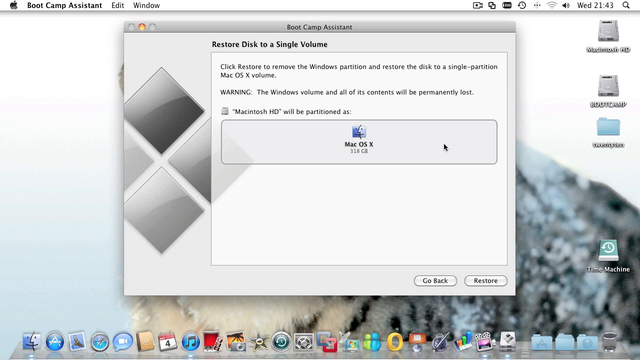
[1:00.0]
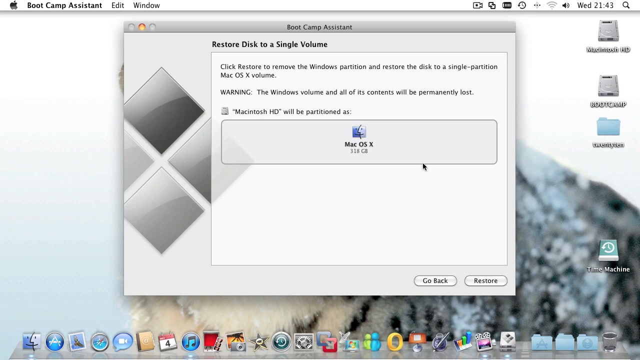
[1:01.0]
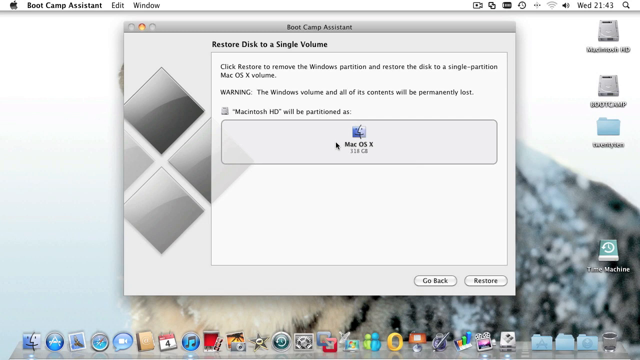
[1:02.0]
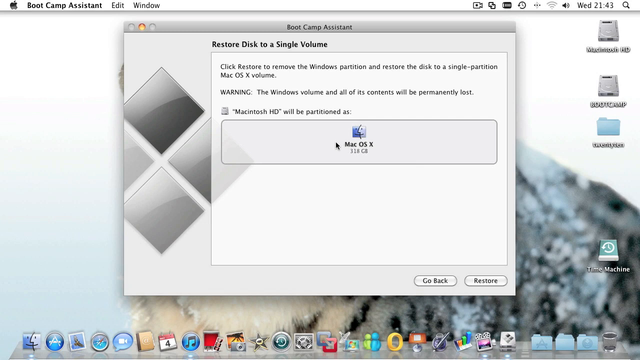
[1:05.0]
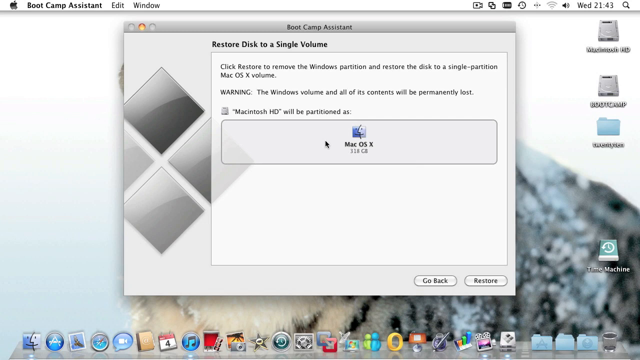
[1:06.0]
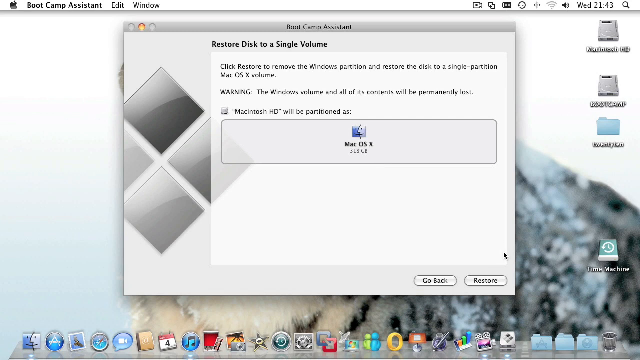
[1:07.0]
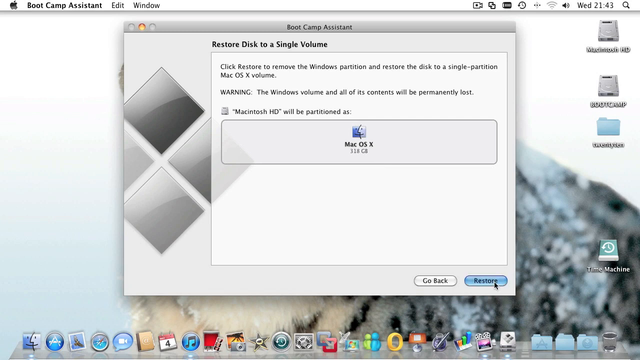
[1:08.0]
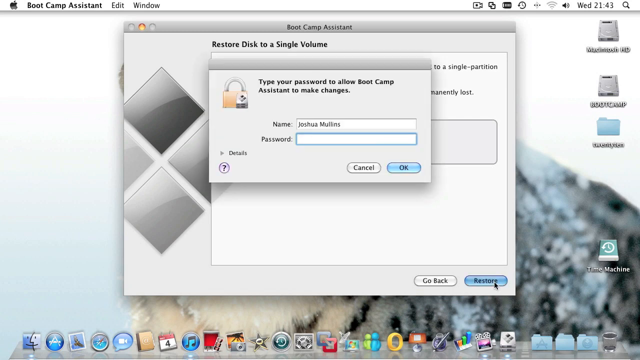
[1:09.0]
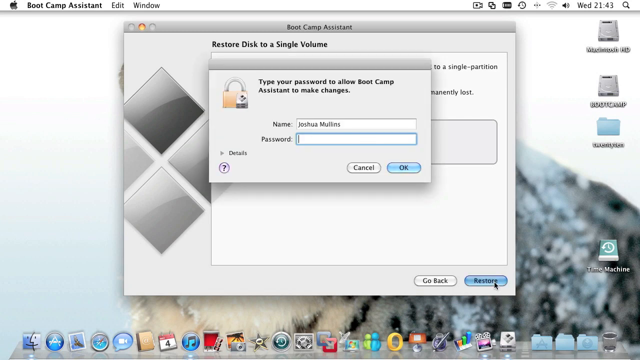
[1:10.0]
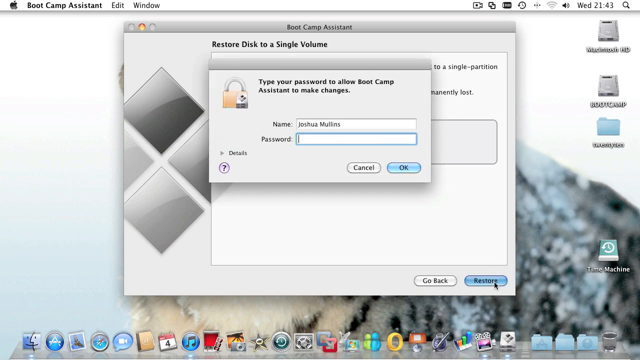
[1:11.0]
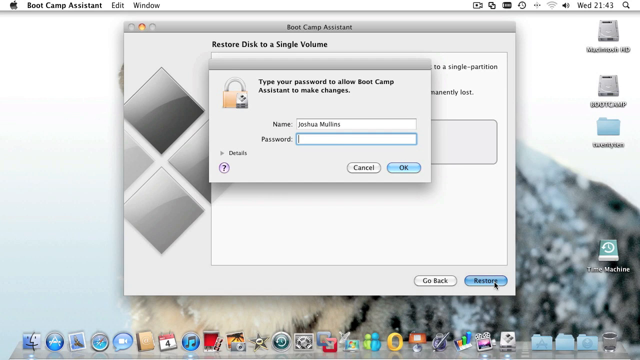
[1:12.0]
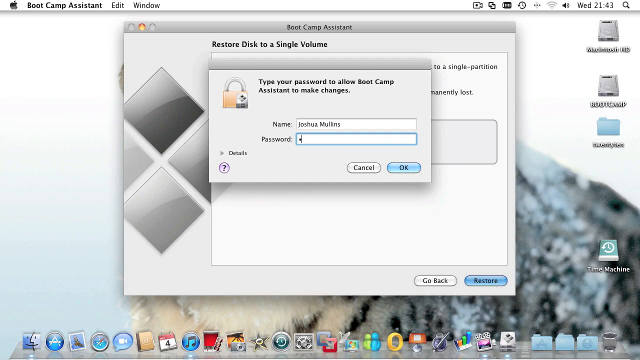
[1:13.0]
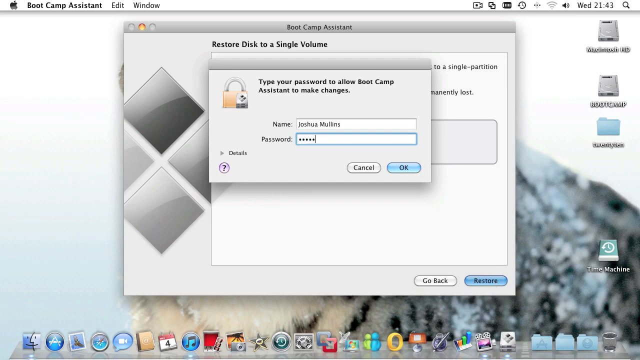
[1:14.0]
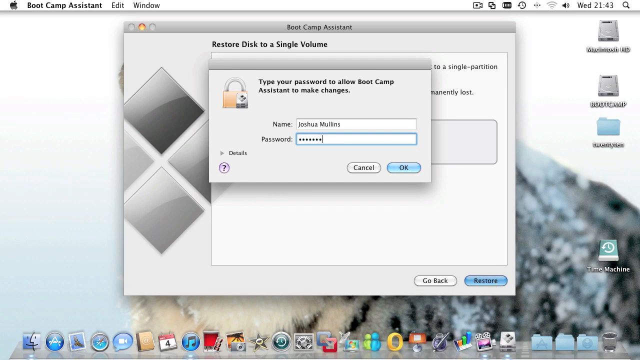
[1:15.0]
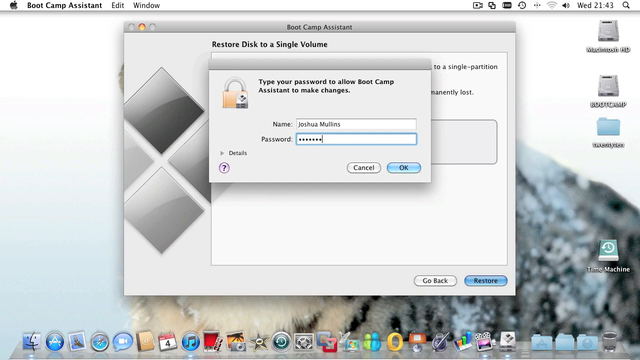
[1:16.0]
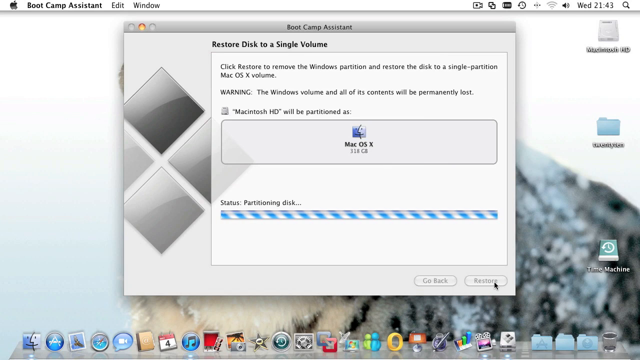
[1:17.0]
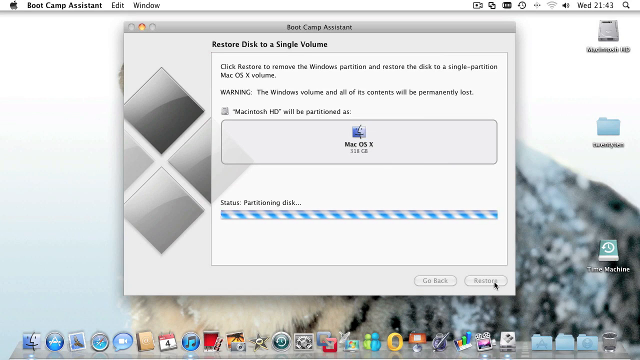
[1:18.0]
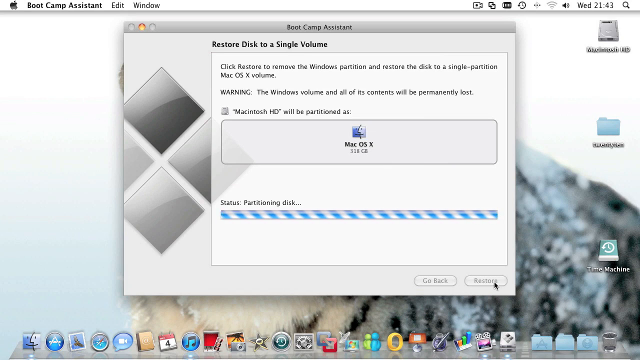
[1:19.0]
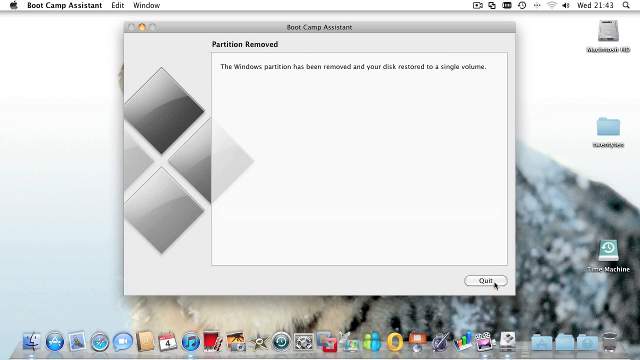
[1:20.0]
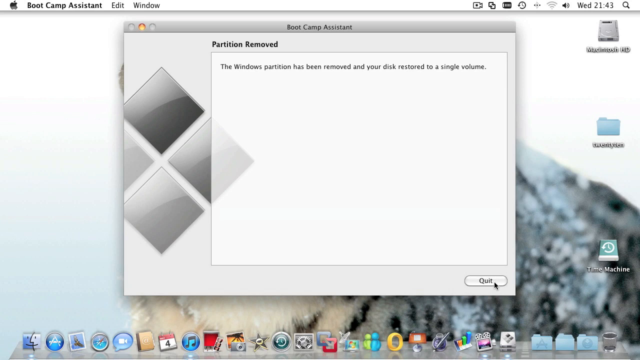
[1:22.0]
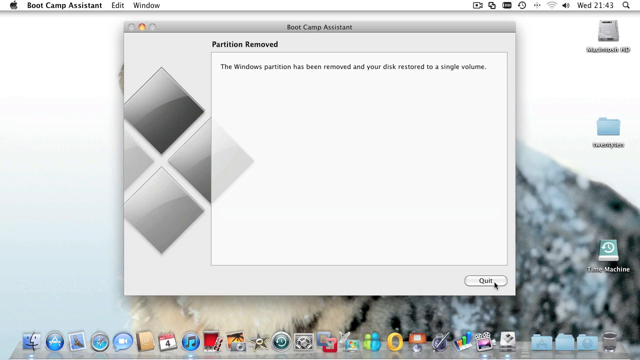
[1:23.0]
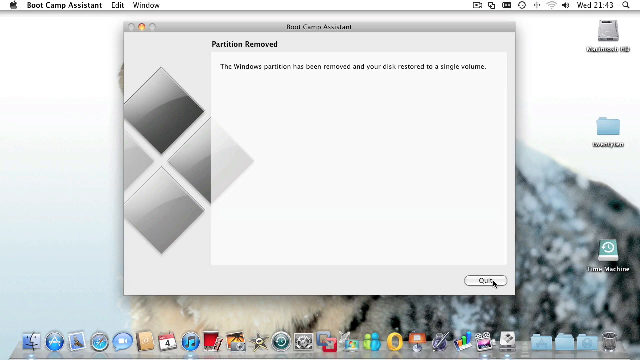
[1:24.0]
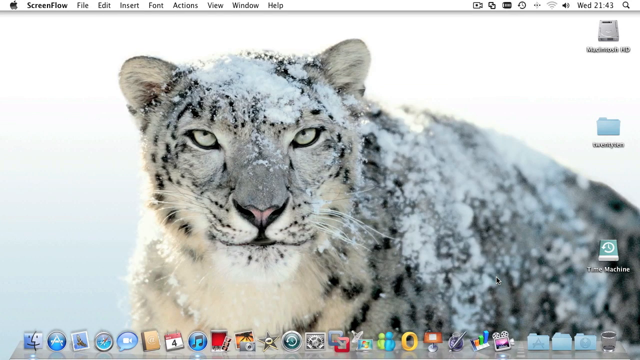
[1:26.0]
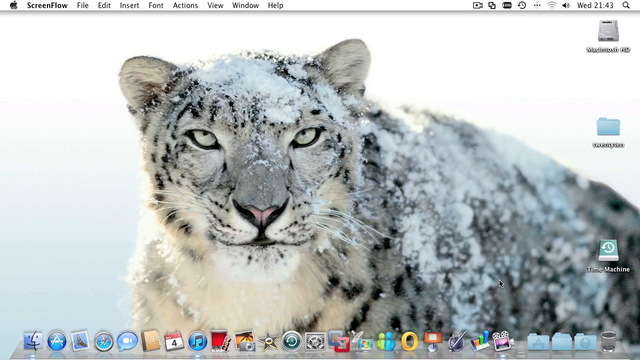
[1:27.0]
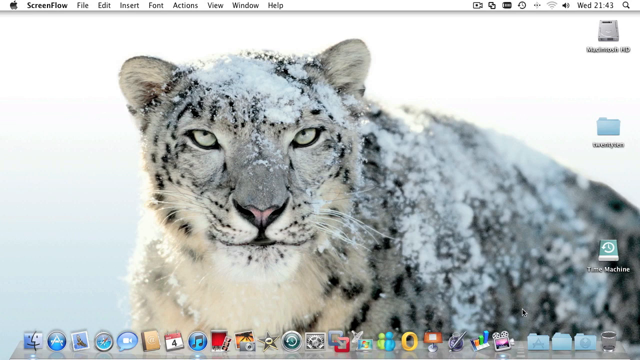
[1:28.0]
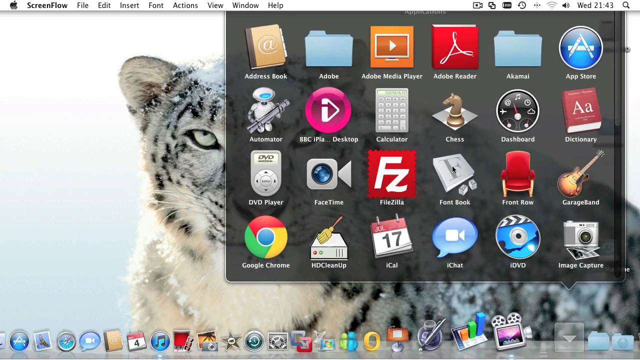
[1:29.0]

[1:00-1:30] An Apple desktop screen shows Boot Camp Assistant open on "Restore disk to a single volume," which says "click restore to remove the Windows partition and restore the disk into a single partition Mac OS X volume," then "WARNING" in all caps, then "the Windows volume and all of its contents will be permanently lost. Macintosh HD will be partitioned as Mac OS X." There are Go Back and Restore buttons. An arrow hovers over the Mac OS option, then moves down and clicks the Restore button. A pop-up appears with a picture of a lock and the text "type your password to allow bootcamp assistant to make changes," showing the name Joshua Mullins with an empty password box, a line reading "details," a purple question mark icon, and Cancel and OK buttons. The cursor in the password field blinks slowly as the password is slowly typed in, and OK is clicked. The box goes away, and at the bottom of Boot Camp Assistant a status bar labeled "partitioning disk" appears; it looks like a blue and white striped straw and moves along as it cycles. Another screen then says "partition removed. The Windows partition has been removed and your disk restored to a single volume." The mouse arrow hovers over the Quit button in the bottom right corner, clicks it, and the window goes away. The desktop returns, showing a gray tiger with big green eyes staring out and snow covering it. The mouse then clicks on the Applications folder and scrolls down.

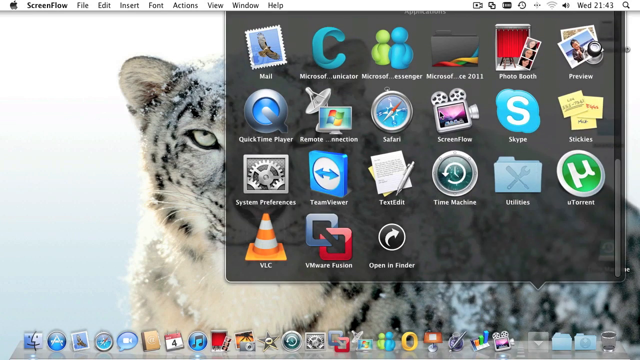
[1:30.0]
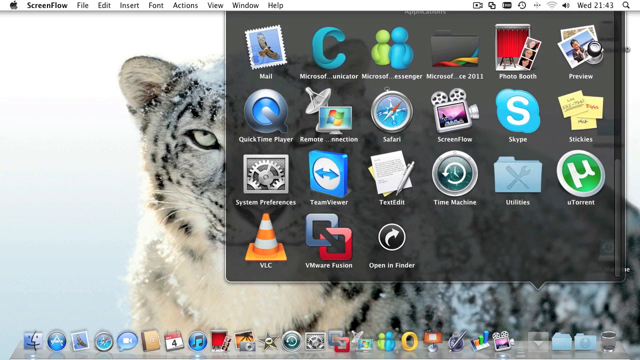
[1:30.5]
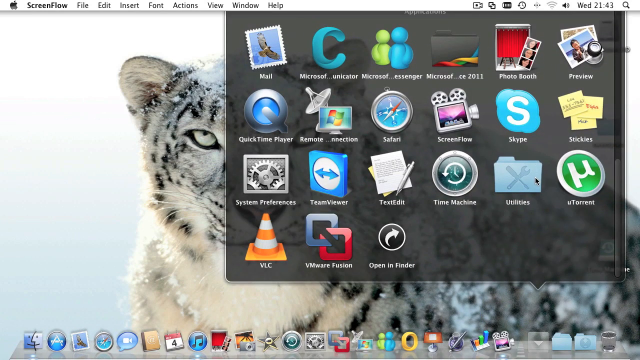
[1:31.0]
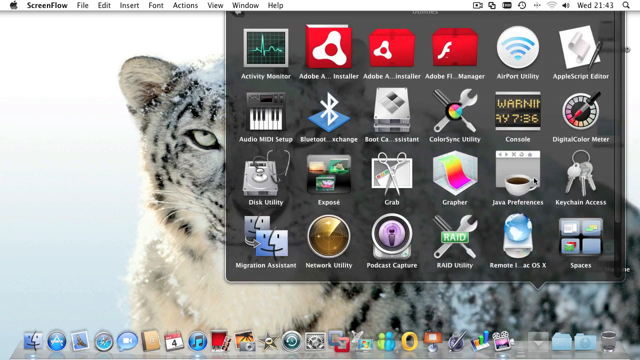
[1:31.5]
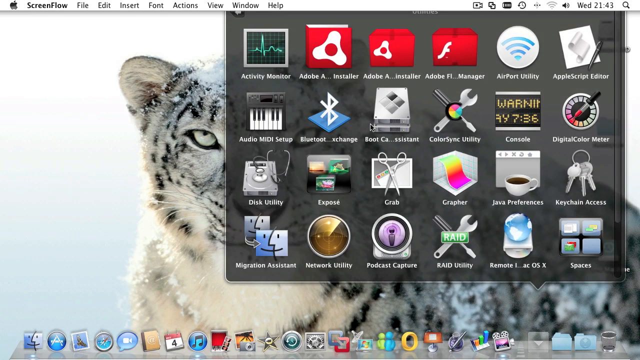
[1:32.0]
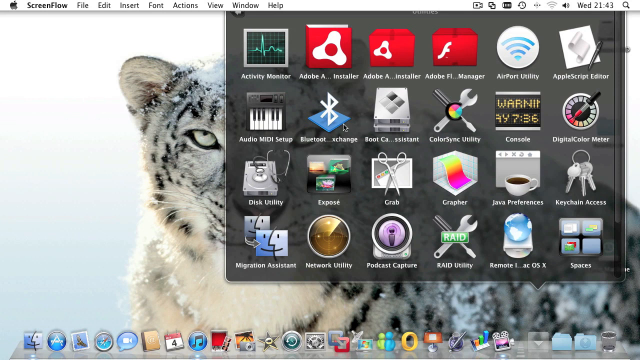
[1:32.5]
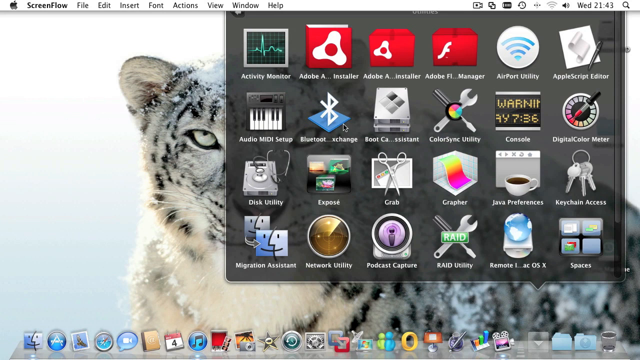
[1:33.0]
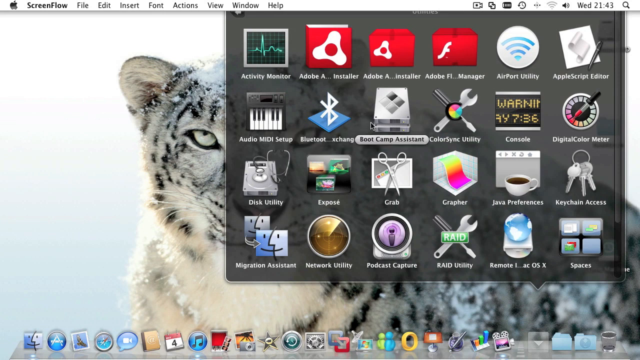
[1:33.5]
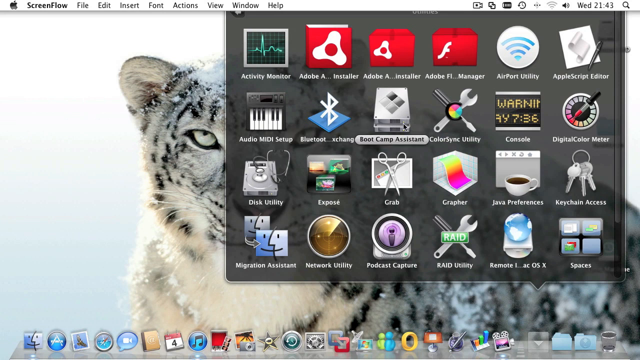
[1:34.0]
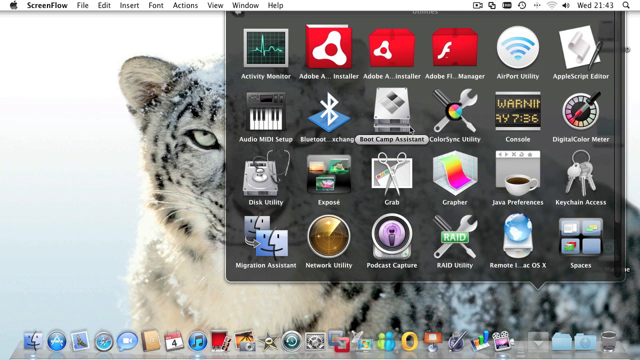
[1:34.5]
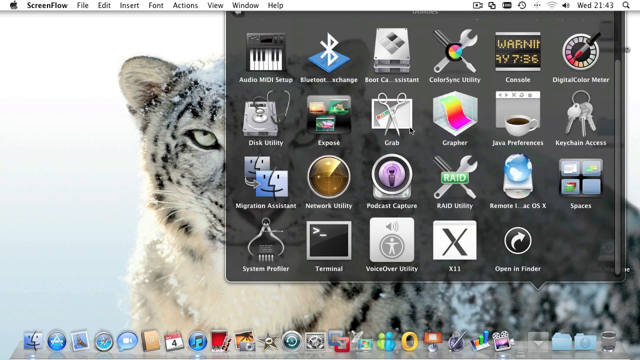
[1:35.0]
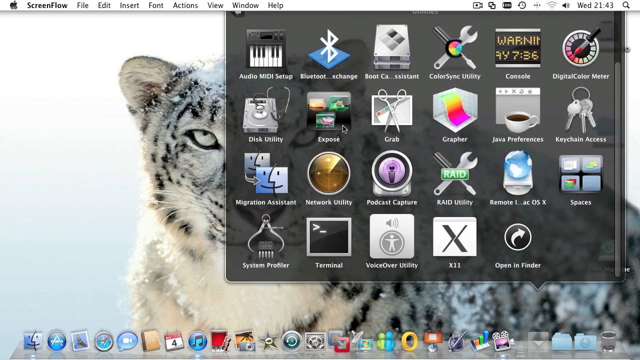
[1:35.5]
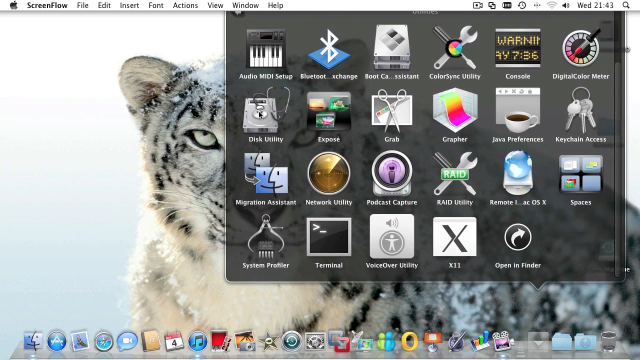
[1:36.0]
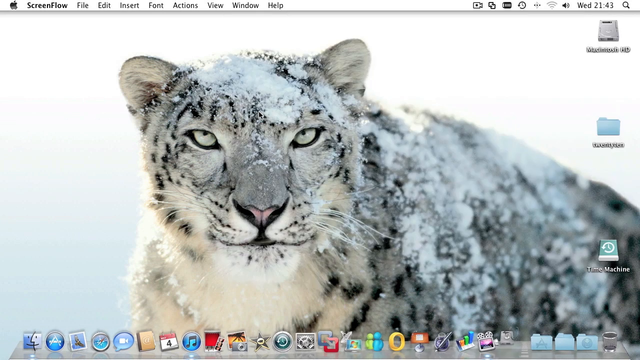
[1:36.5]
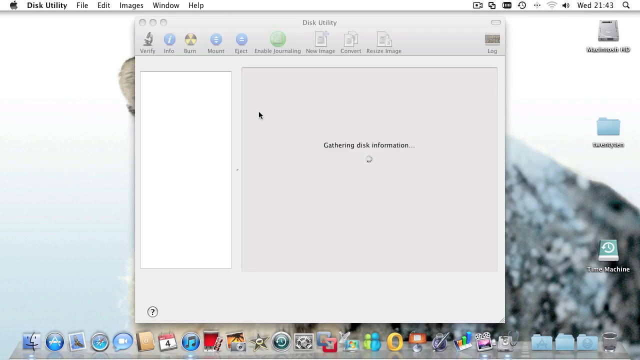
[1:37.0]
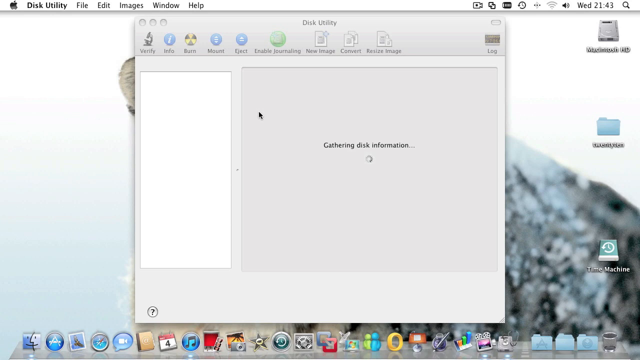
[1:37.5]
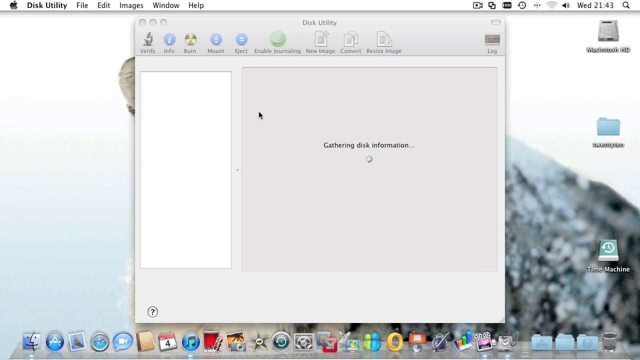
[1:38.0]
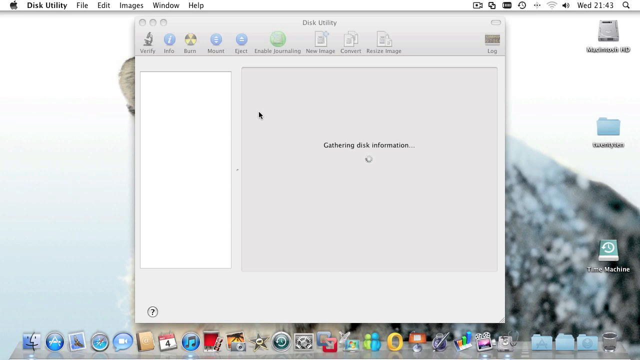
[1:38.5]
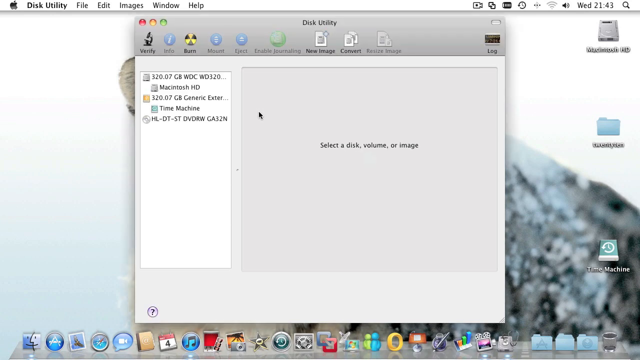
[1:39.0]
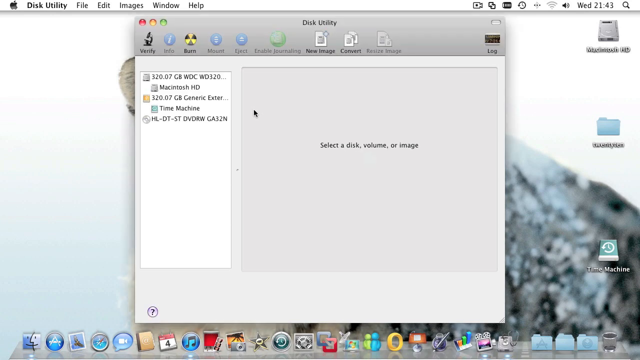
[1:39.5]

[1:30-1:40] A Mac computer has a window open with different applications, and the wallpaper is a gray tiger, with part of the right side of its head visible and its green eye staring out. The folder opens with icons including Mail, Microsoft Messenger, Photo Boost, Preview, QuickTime Player, Remote Connection, Safari, ScreenFlow, Skype, Stickies, System Preferences, TeamViewer, TextEdit, Time Machine, Utilities, uTorrent, VLC, VMware Fusion, and Open in Finder, all with icons of various shapes and colors. The Utilities folder is clicked, showing Activity Monitor, Adobe Installer, Adobe Manager, AirPort Utility, AppleScript Editor, Audio MIDI Setup, Bluetooth Exchange, Boot Camp Assistant, ColorSync Utility, Console, Digital Color Meter, Disk Utility, Exposé, Grab, Grapher, Java Preferences, Keychain Access, Network Utility, Podcast Capture, RAID Utility, Remote, and Spaces. The cursor hovers over Bluetooth and then Boot Camp, then quickly moves on and clicks Disk Utility. The Disk Utility window opens with options reading "verify, info, burn, mount, eject, enable journaling, new image, convert, resize image." In the middle of the screen it reads "gathering disk information" with a circle spinning as it processes. There is a question mark icon in the bottom left corner.